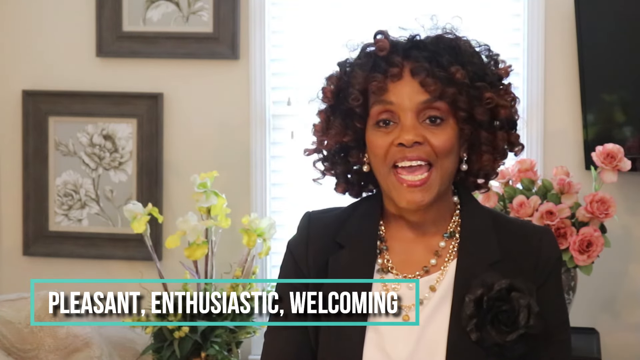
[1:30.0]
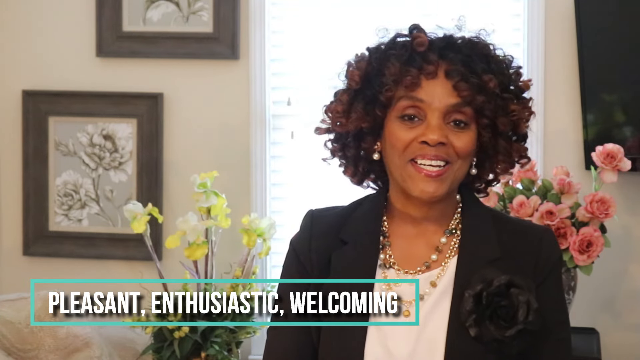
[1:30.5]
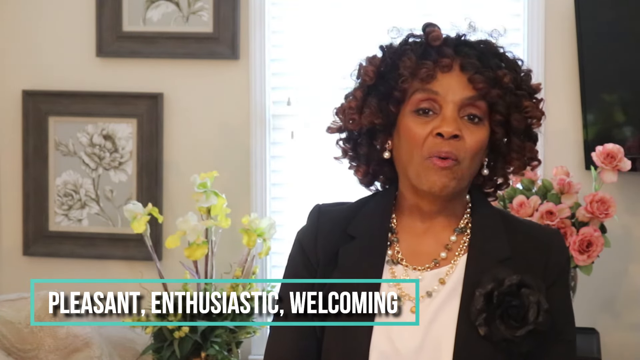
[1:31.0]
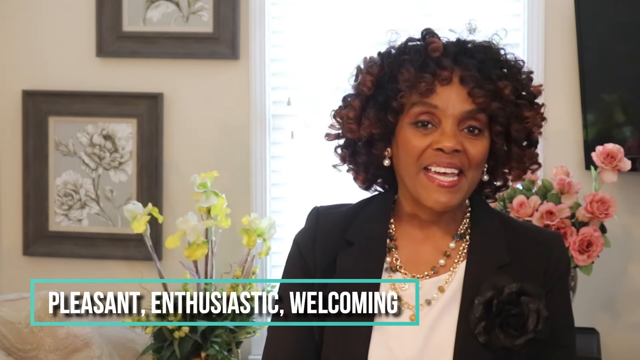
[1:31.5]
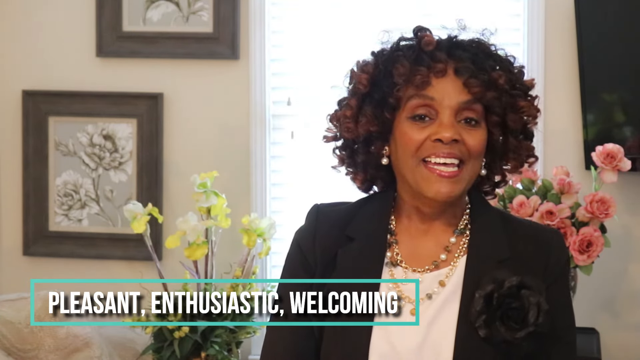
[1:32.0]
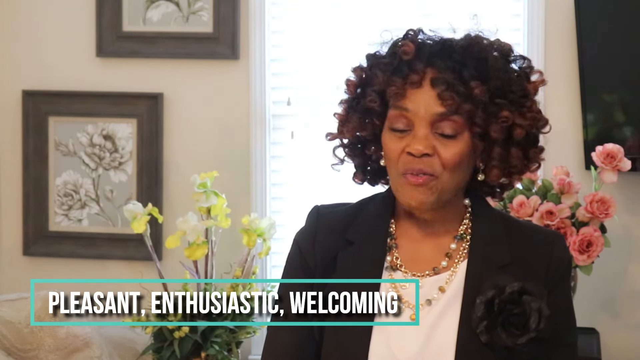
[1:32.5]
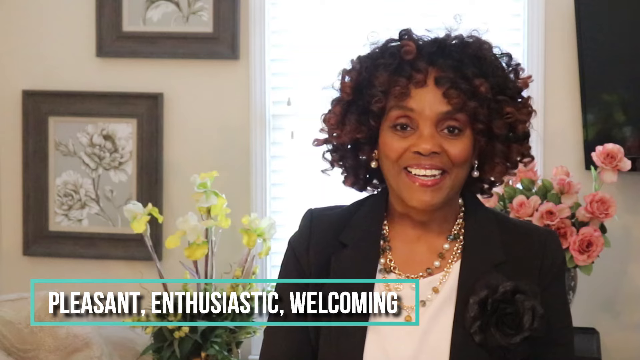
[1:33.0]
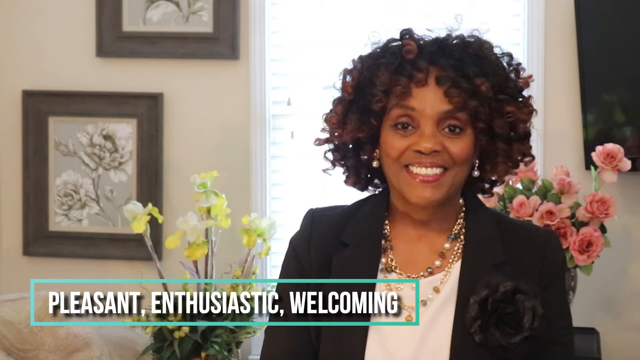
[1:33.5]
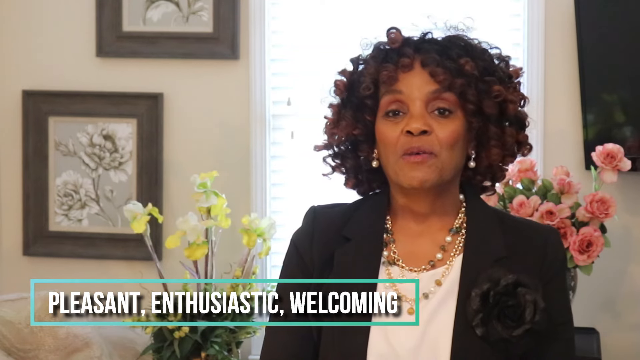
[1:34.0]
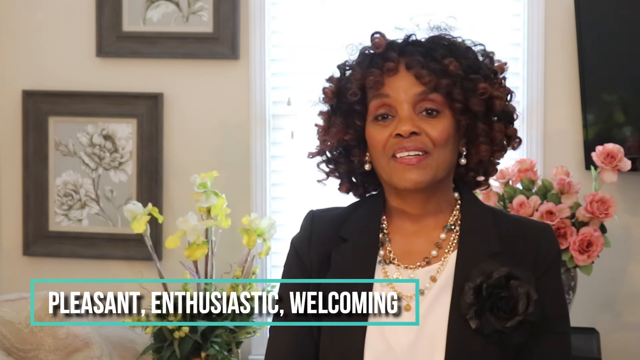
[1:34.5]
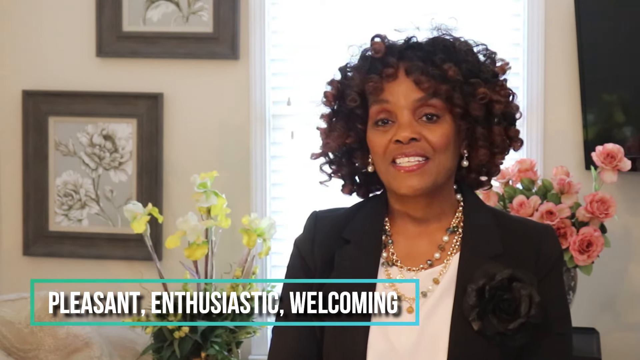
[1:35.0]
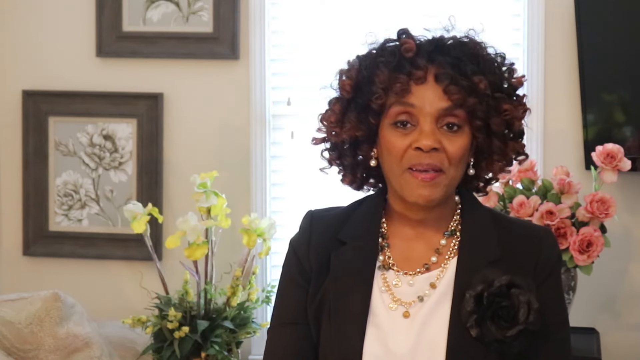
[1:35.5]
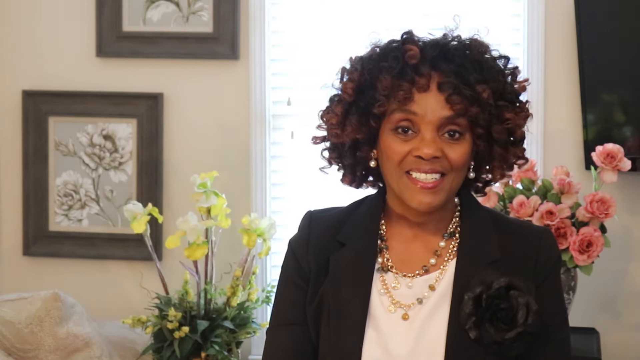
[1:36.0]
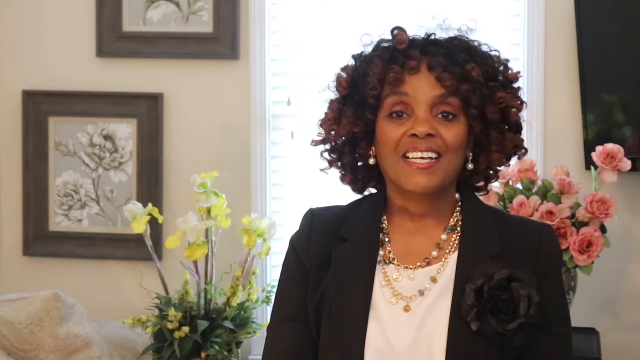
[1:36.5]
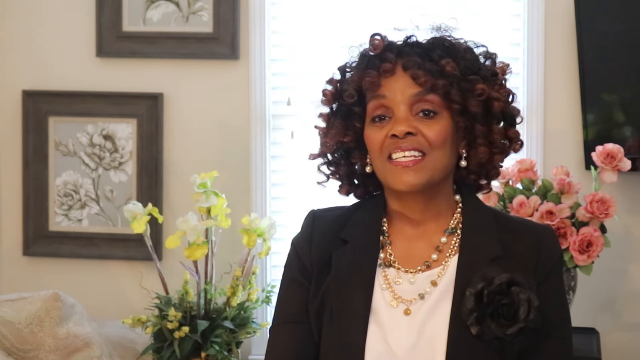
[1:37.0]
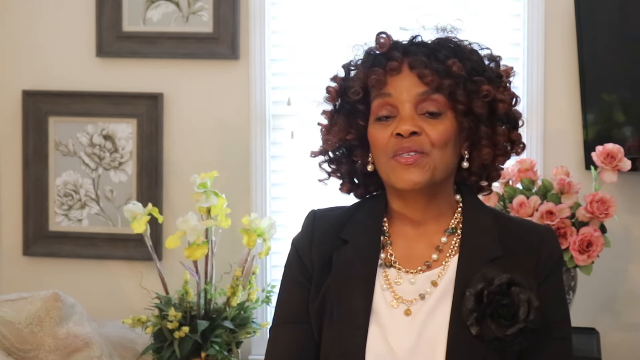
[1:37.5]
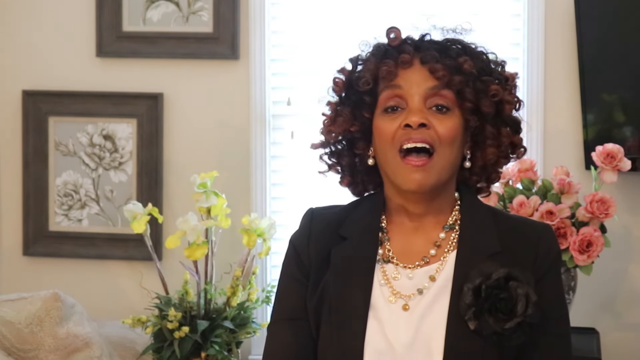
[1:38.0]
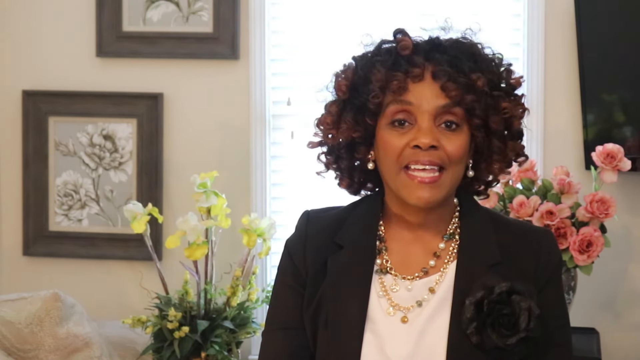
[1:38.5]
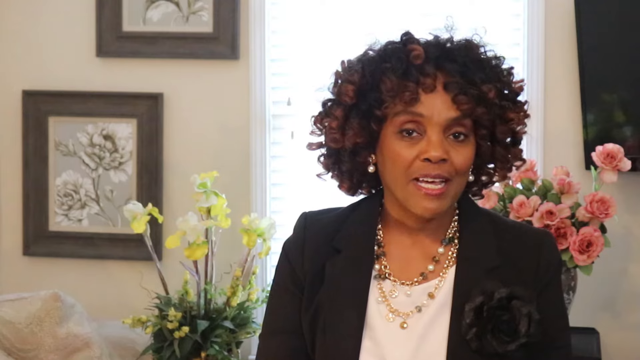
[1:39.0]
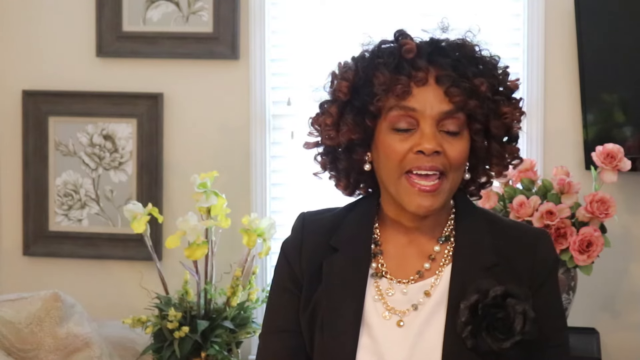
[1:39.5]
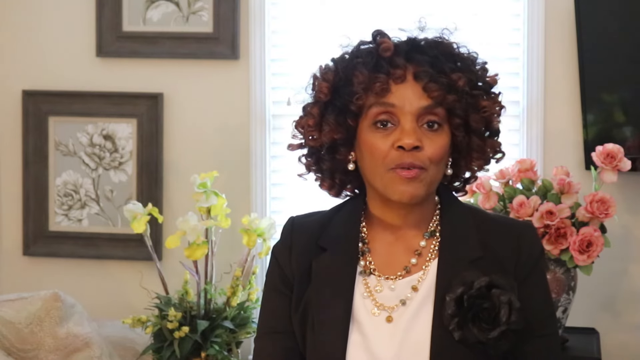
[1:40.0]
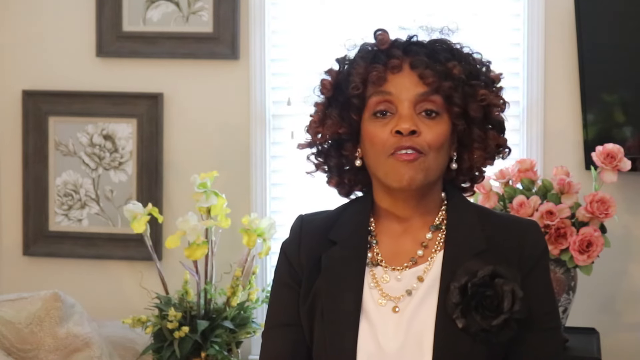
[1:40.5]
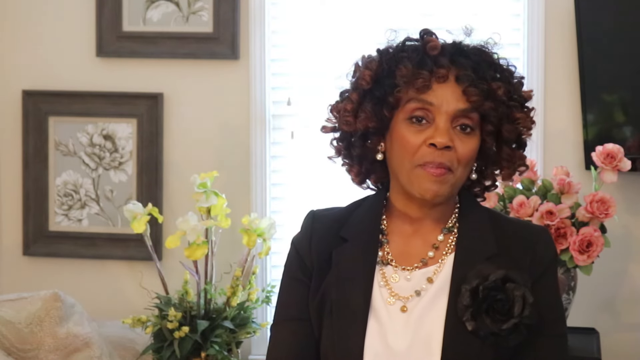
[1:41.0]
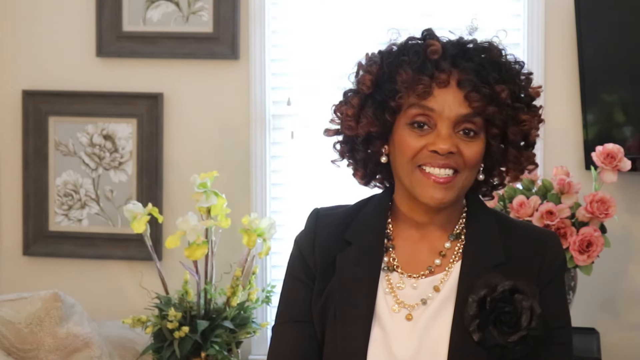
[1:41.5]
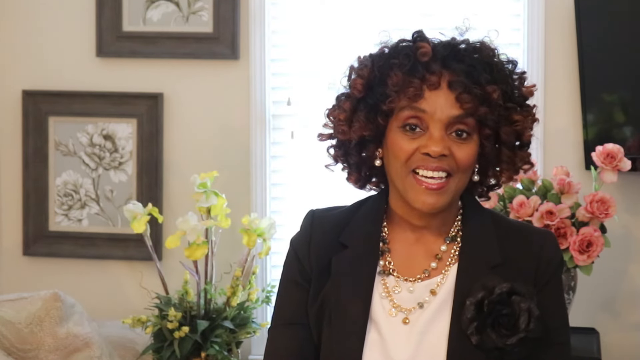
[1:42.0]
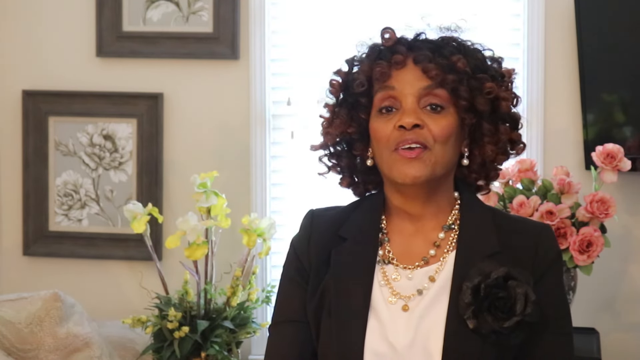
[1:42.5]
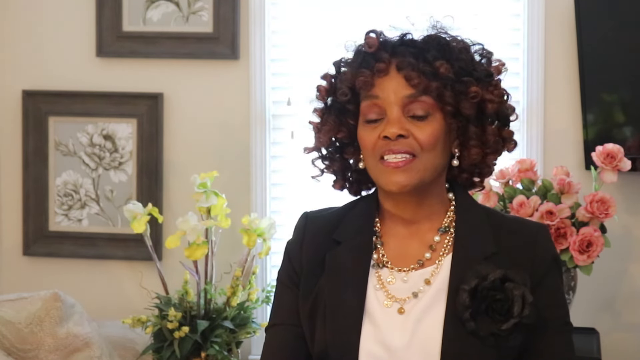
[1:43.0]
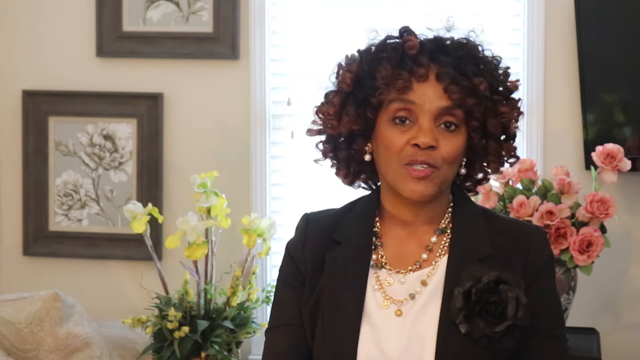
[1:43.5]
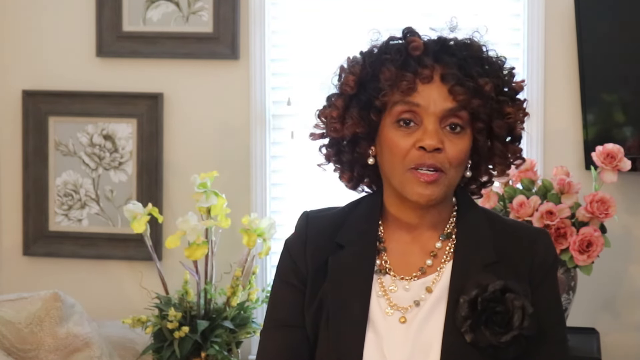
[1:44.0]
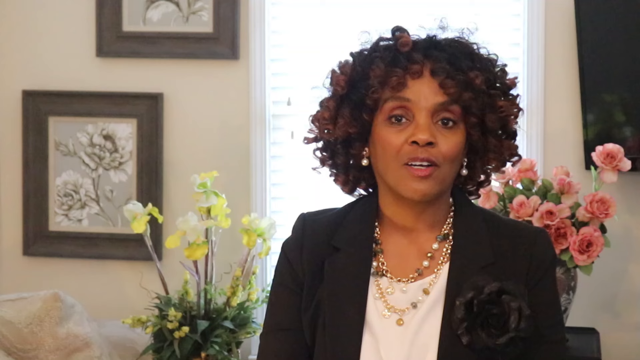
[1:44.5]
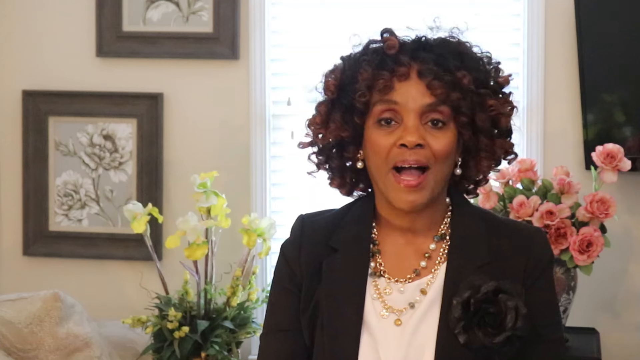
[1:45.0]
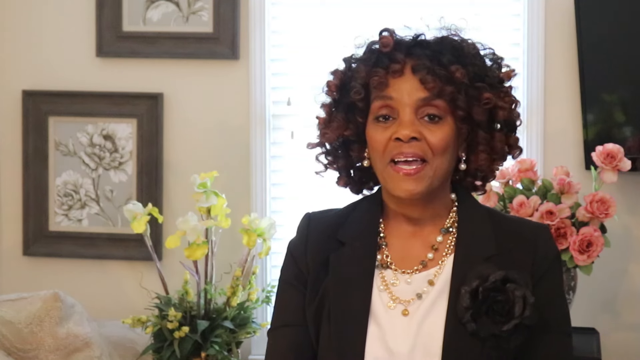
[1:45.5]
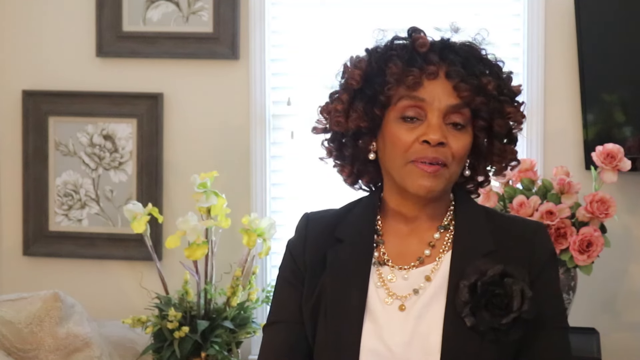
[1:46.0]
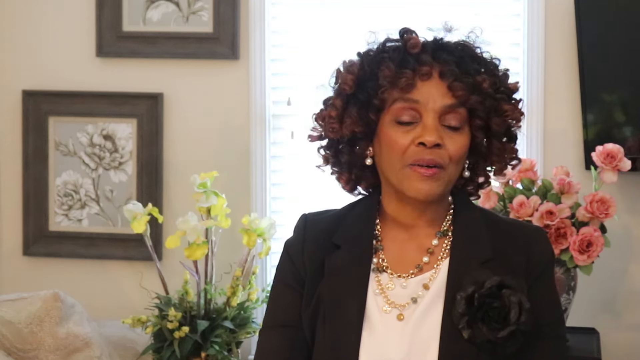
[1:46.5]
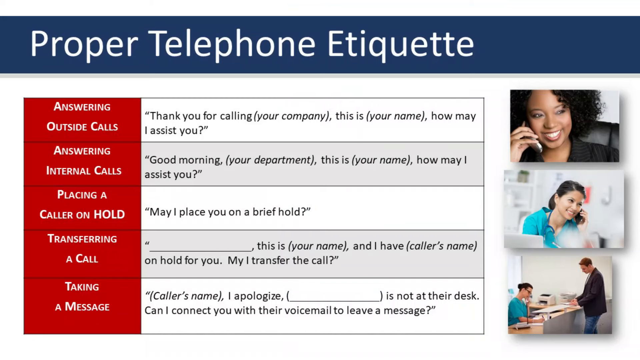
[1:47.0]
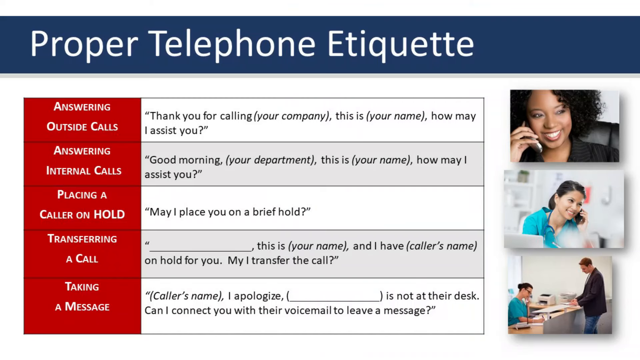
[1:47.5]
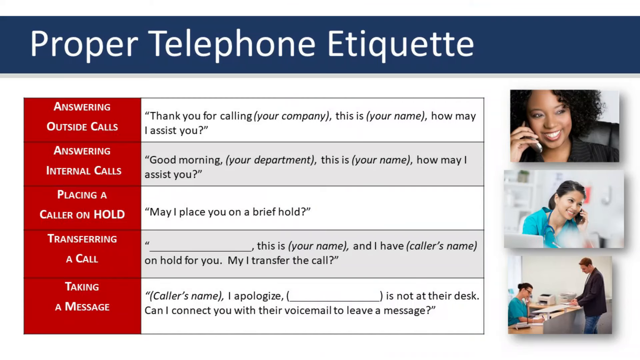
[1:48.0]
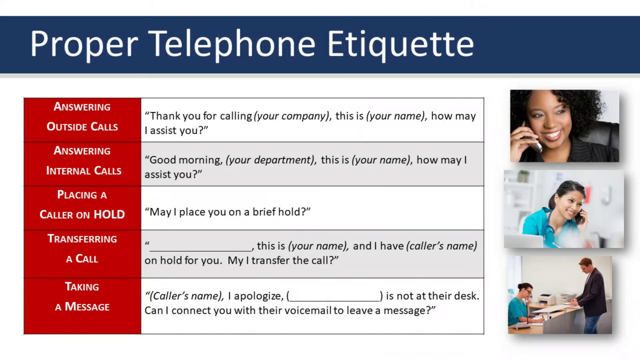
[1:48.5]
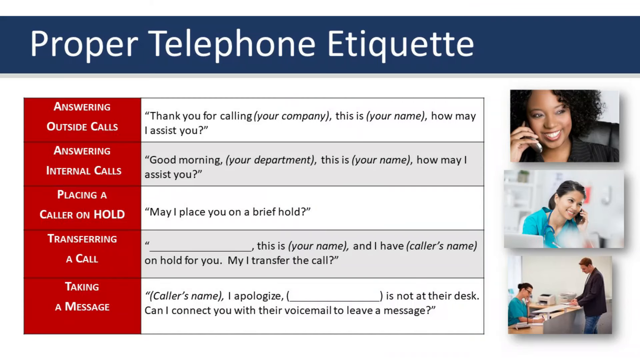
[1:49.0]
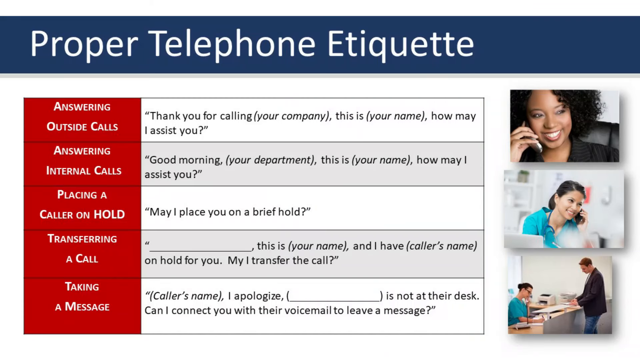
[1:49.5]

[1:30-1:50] The woman speaks, still smiling a lot and showing her teeth, and looks presentable. A page then appears that says "proper telephone etiquette": "Answering outside calls. Thank you for calling your company. This is your name and how may I assist you? Answering internal calls. Good morning, your department. This is your name. How may I assist you? Placing a caller on hold. May I place you in a brief hold? Transferring a call. Blank. This is your name and I have caller's name on hold. May I transfer the call? Taking a message. Caller's name. I apologize. Blank. It's not at their desk. Can I connect you with their voicemail to leave a message?"